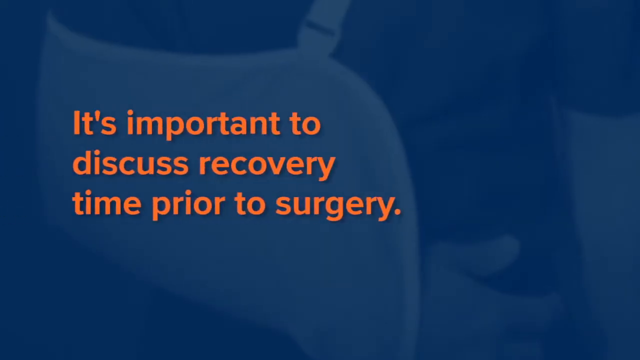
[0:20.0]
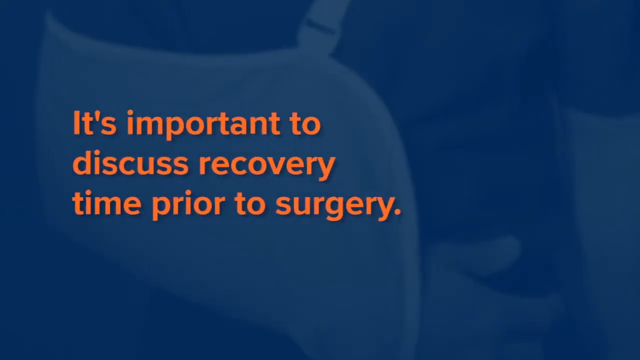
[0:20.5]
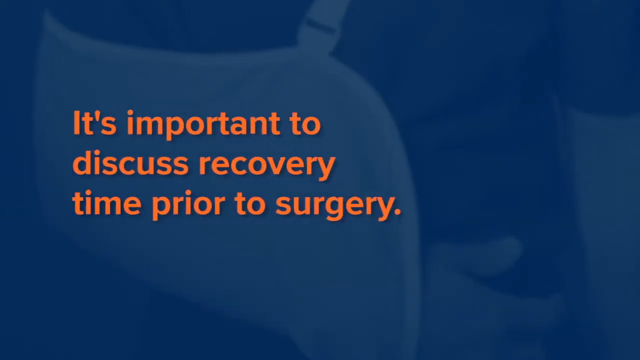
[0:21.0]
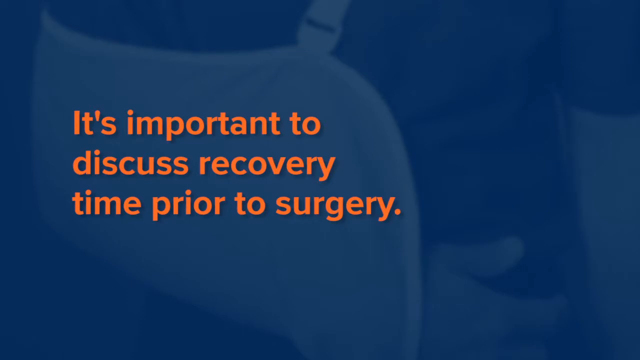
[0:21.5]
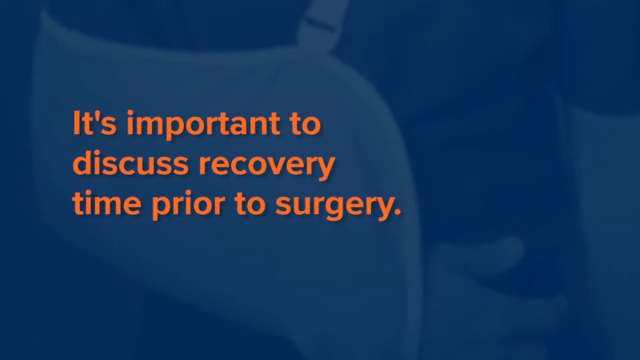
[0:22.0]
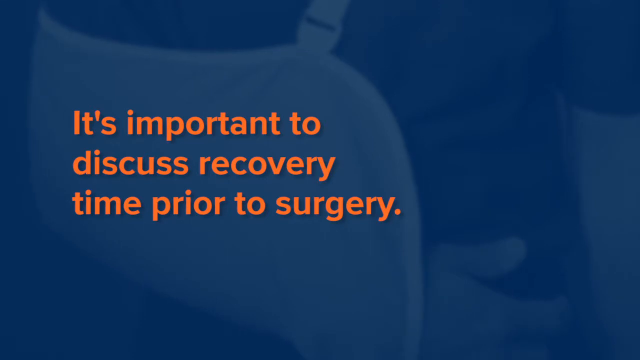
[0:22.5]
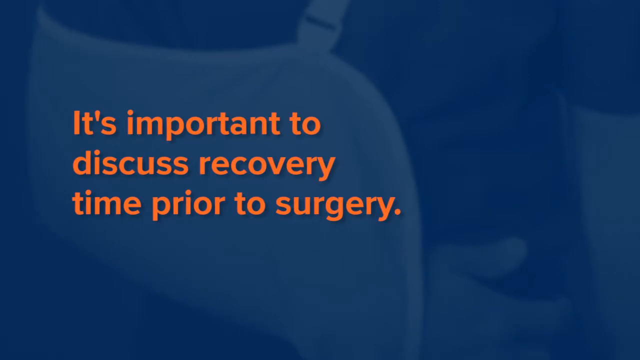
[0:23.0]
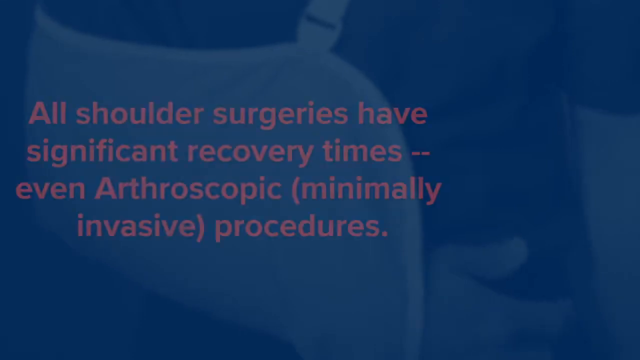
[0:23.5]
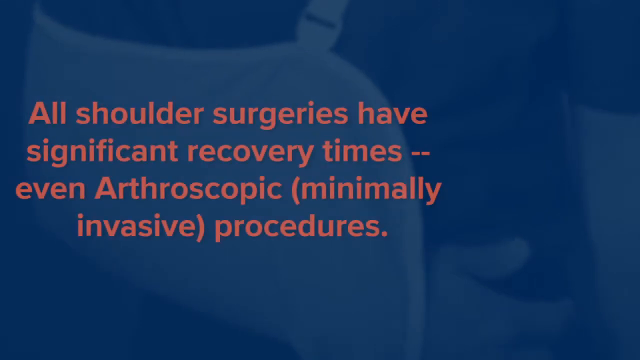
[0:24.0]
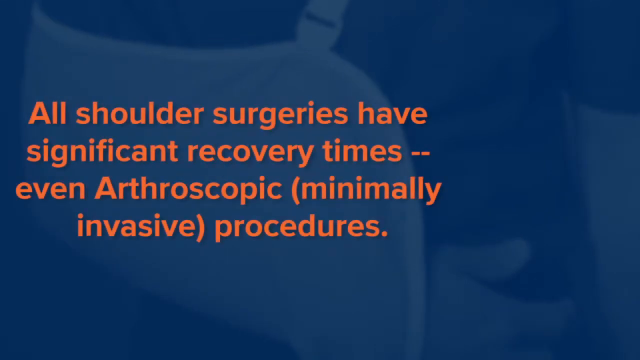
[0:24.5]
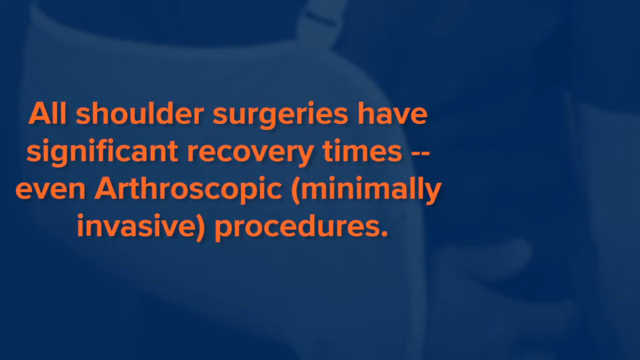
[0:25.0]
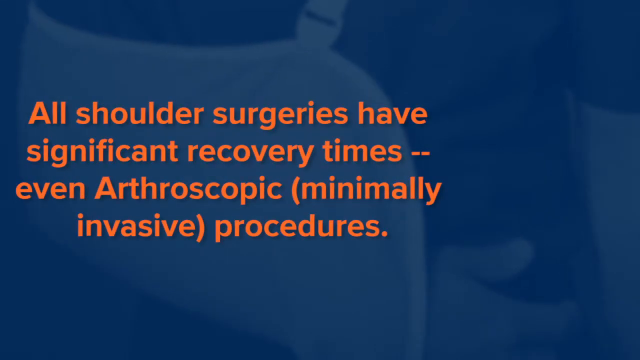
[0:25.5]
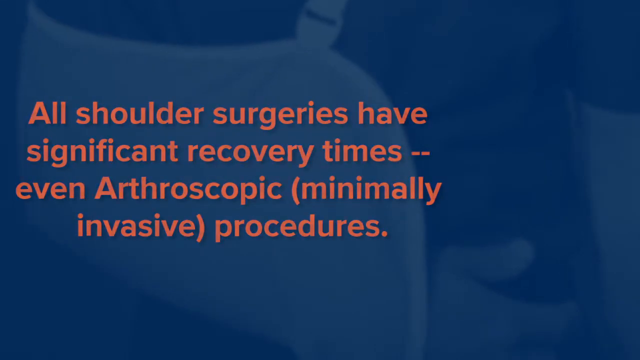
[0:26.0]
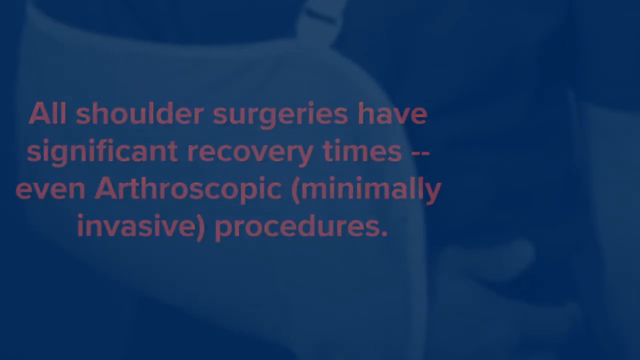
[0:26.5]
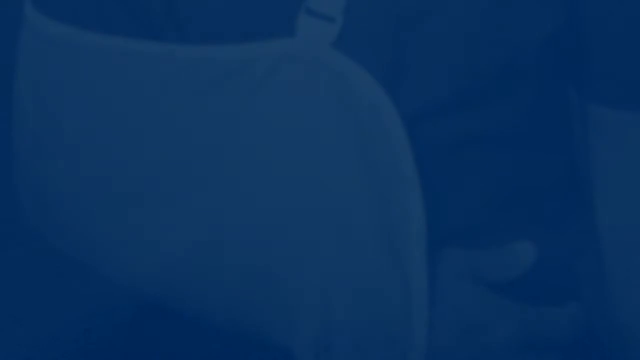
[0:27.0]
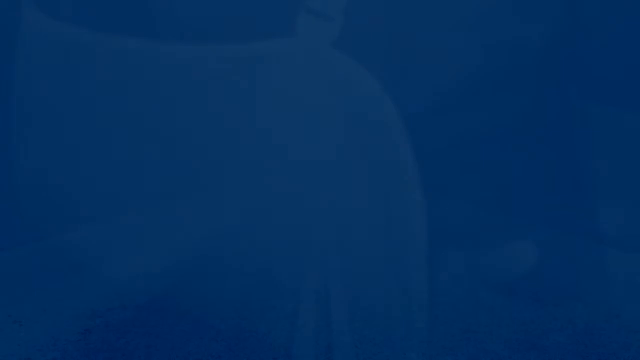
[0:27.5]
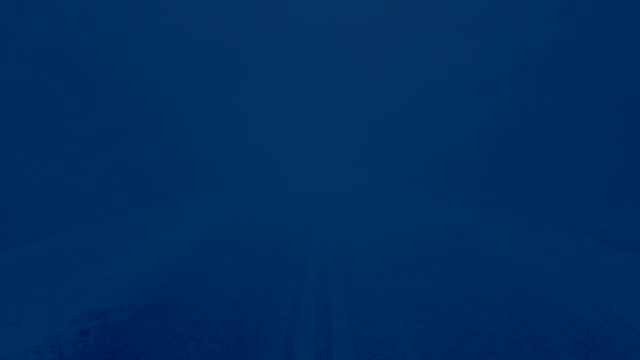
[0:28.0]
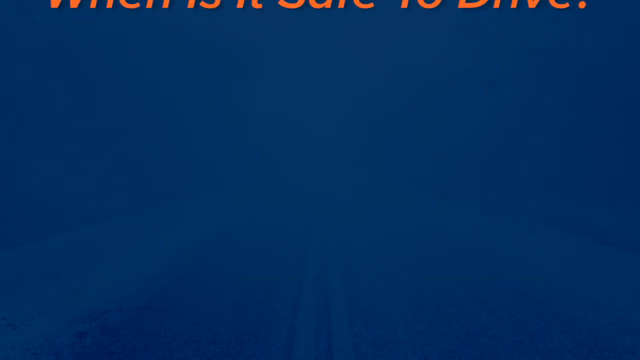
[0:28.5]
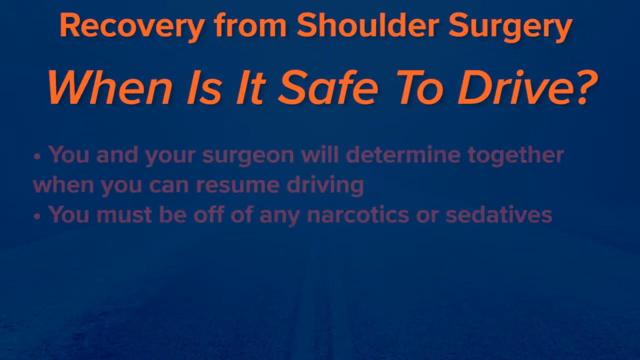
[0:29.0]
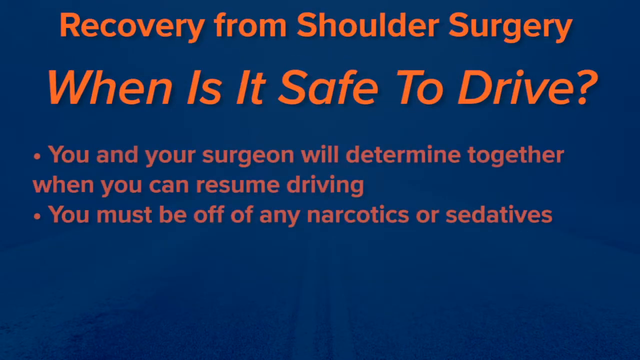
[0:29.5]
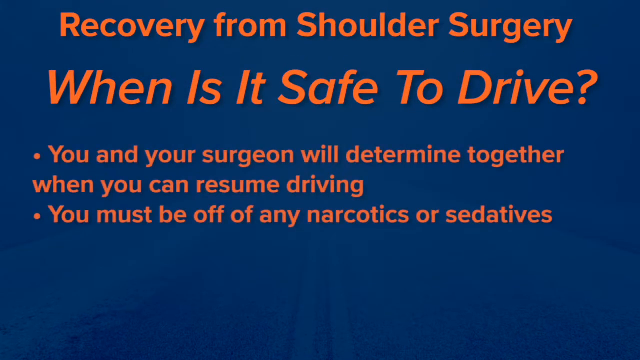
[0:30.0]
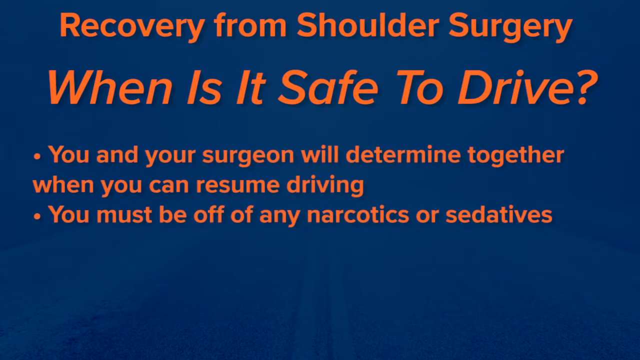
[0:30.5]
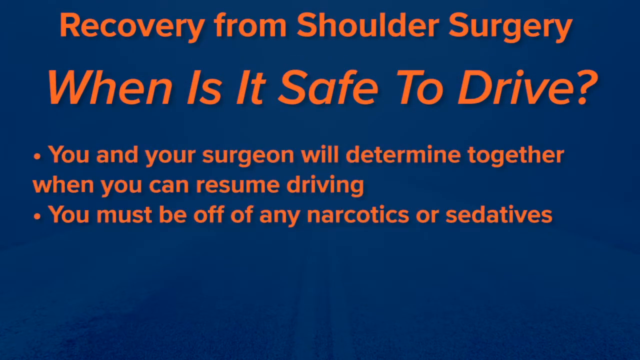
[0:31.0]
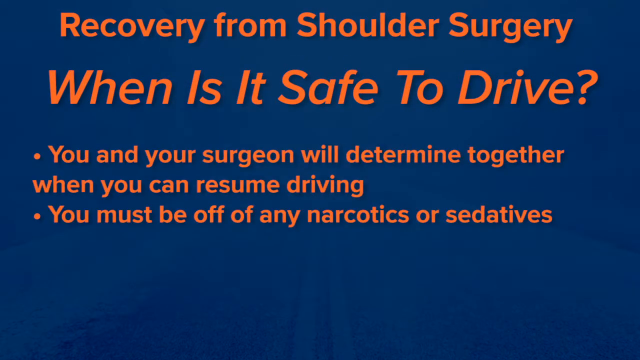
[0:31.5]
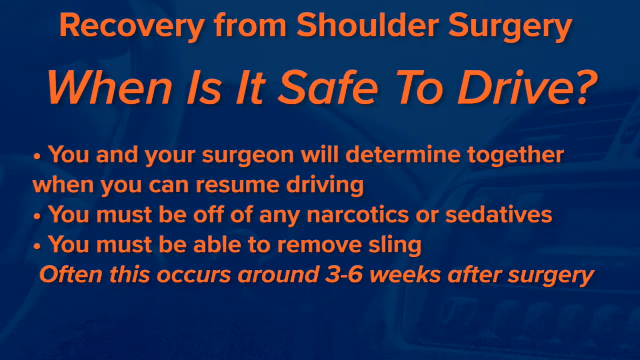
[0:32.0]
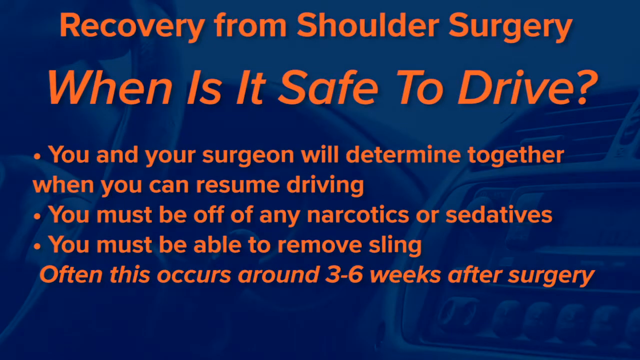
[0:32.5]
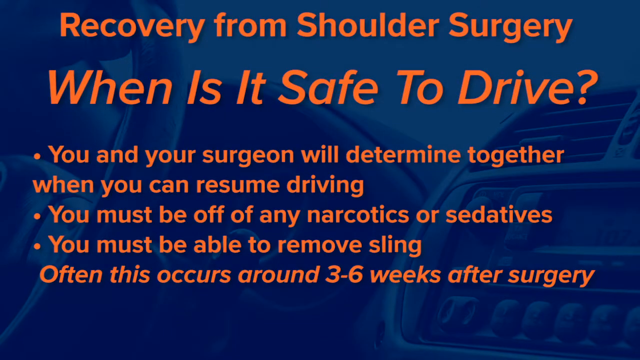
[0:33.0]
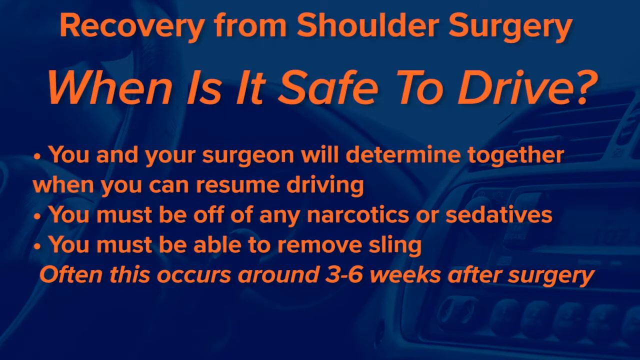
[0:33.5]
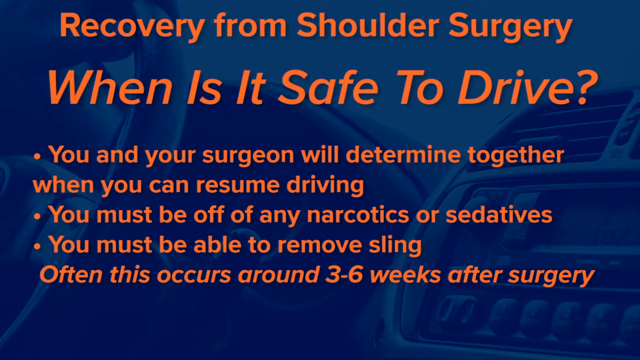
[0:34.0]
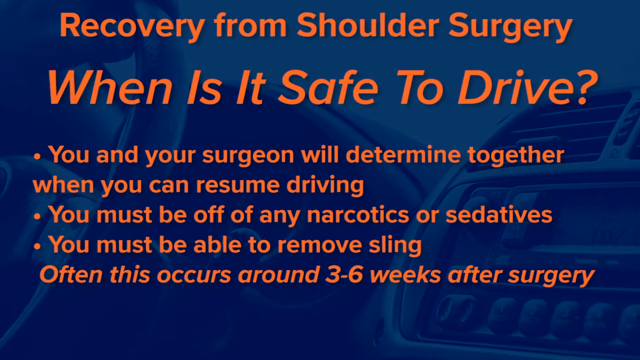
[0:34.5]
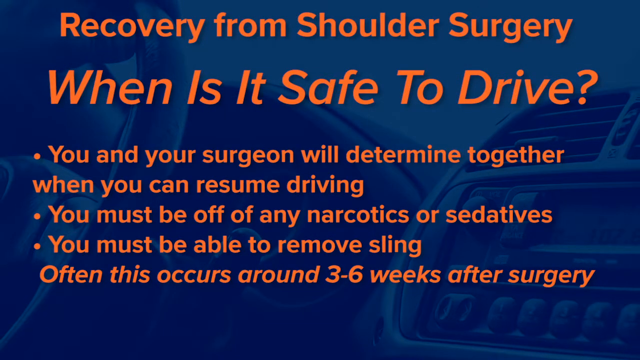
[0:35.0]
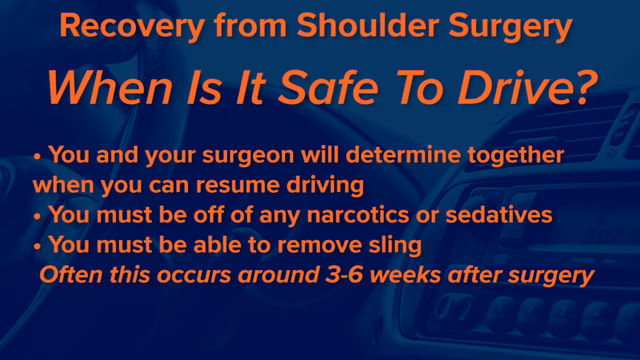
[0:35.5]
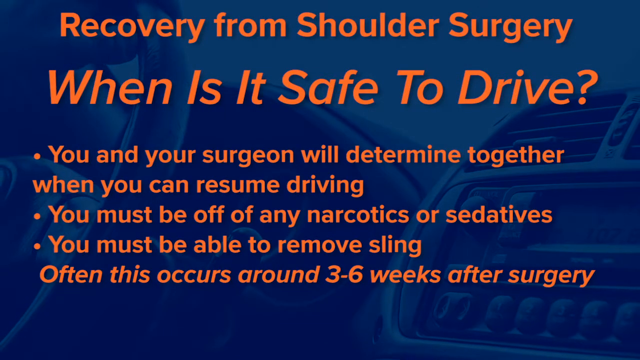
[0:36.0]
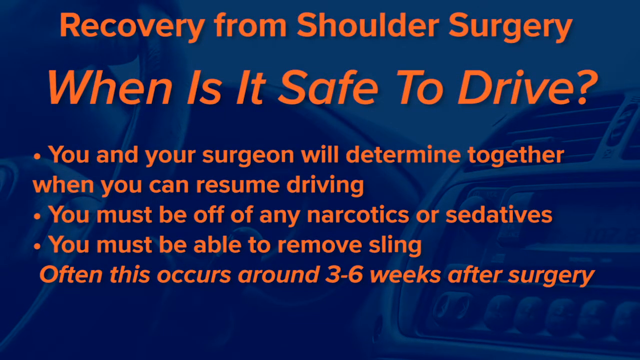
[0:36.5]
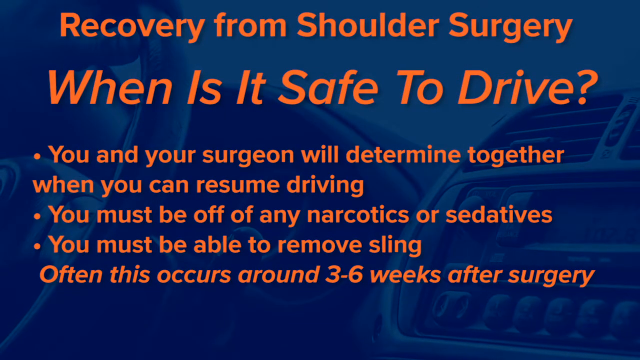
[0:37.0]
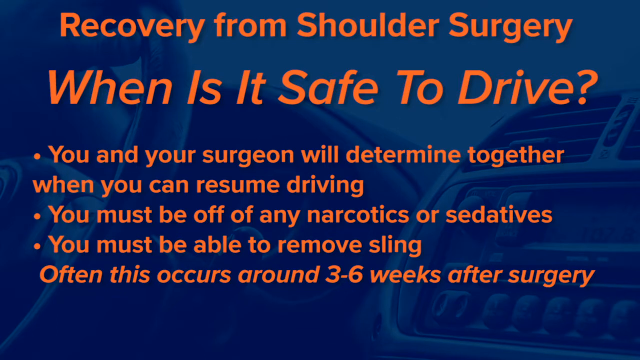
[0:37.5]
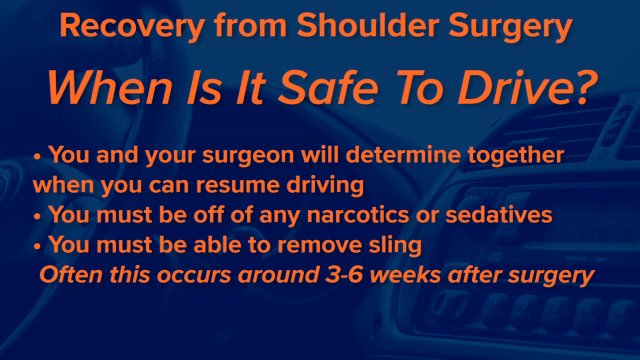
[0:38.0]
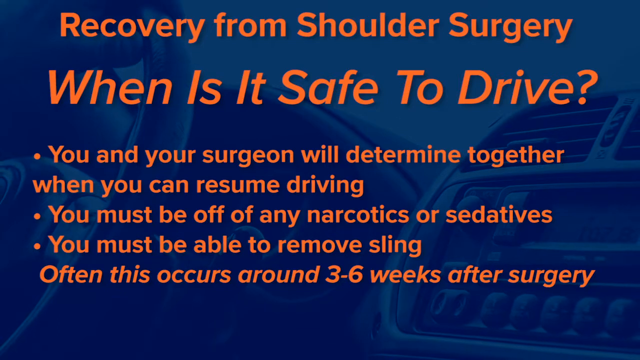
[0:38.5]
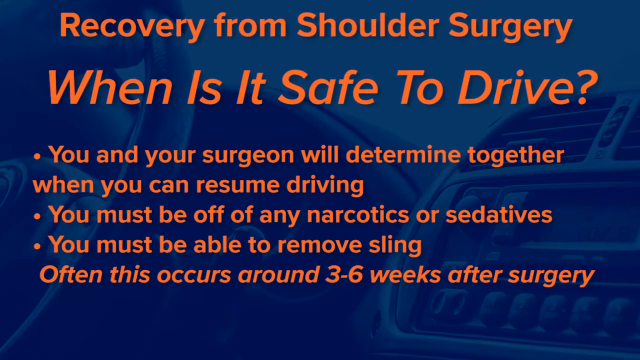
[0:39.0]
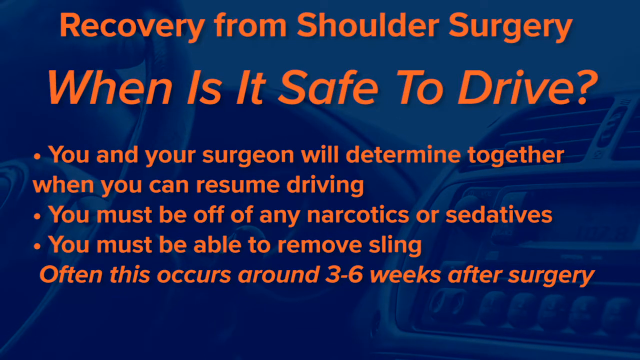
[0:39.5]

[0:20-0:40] The silhouette of the person is on screen in a zoomed-in view, showing only the upper part of their arms and a bit of their torso. Their right arm is in a sling. The words "it's important to discuss recovery time prior to surgery" are written in orange lettering toward the left middle of the screen. Next, the words "all shoulder surgeries have significant recovery times" appear, also in orange. Then a blue screen appears, and words come in from the top portion of the screen and glide down into place: "recovery from shoulder surgery. When is it safe to drive? You and your surgeon will determine together when you can resume driving. You must be off any narcotics or sedatives. You must be able to remove sling. Often this occurs around three to six weeks after surgery." In the background is an image of the console and dashboard of a vehicle, along with the steering wheel and a person's hand on the steering wheel.